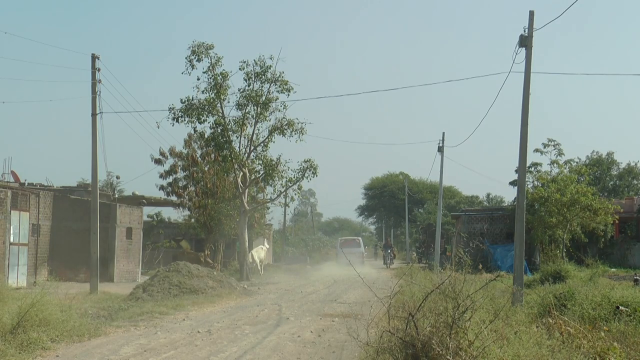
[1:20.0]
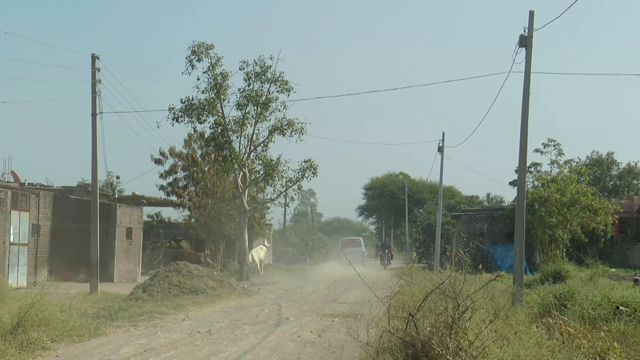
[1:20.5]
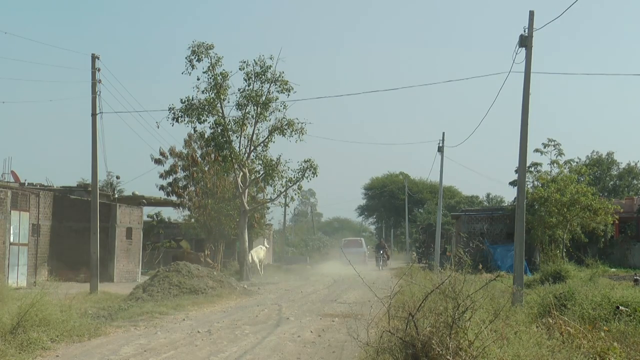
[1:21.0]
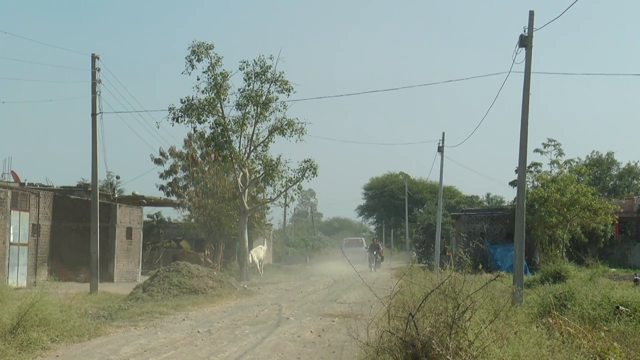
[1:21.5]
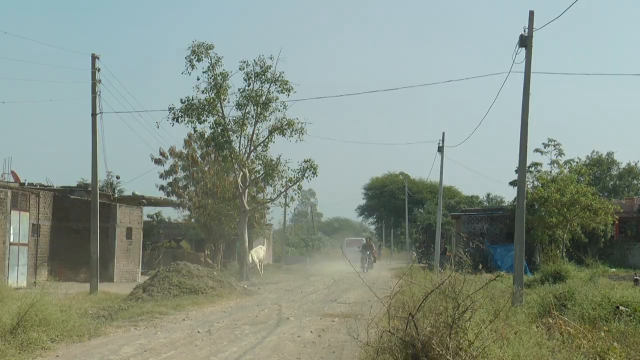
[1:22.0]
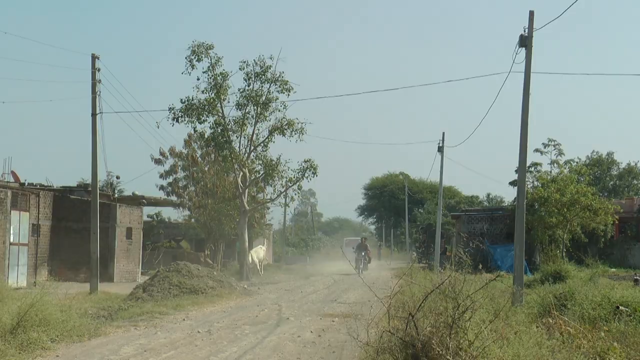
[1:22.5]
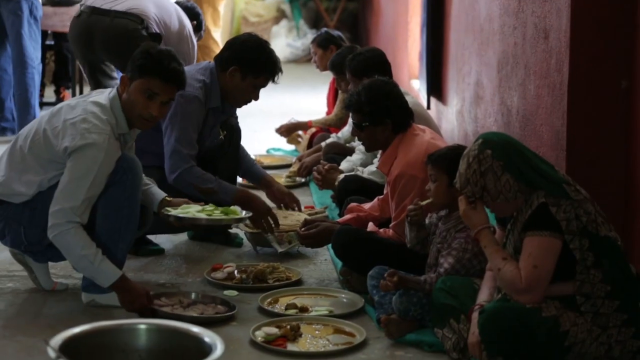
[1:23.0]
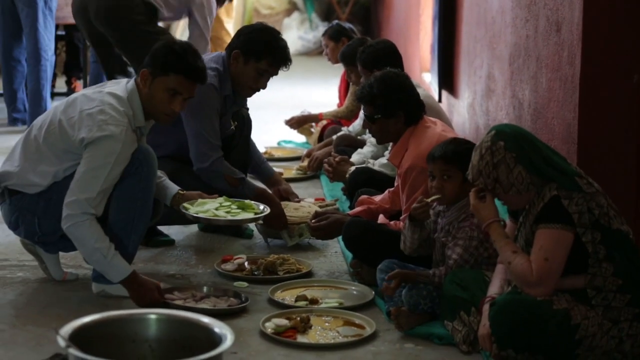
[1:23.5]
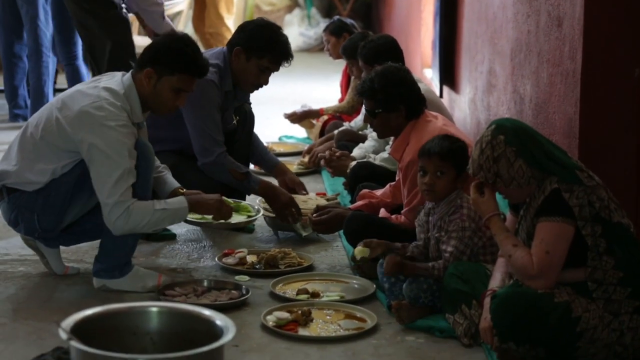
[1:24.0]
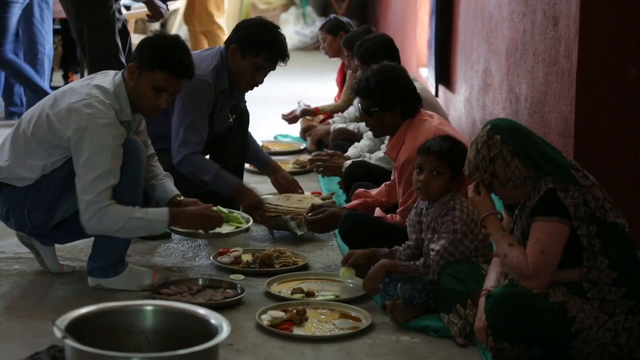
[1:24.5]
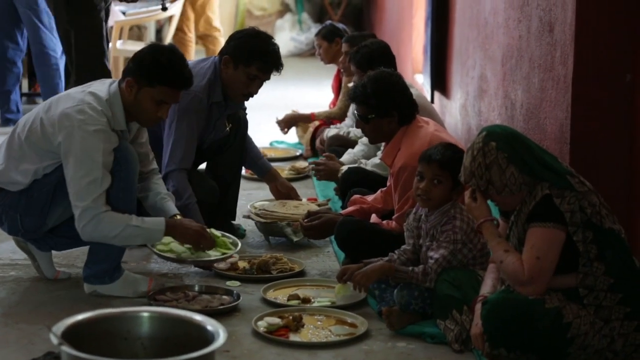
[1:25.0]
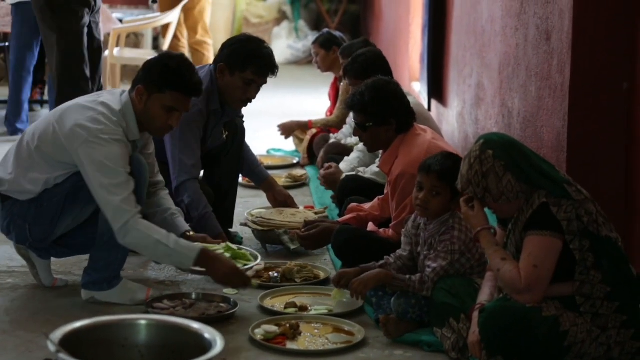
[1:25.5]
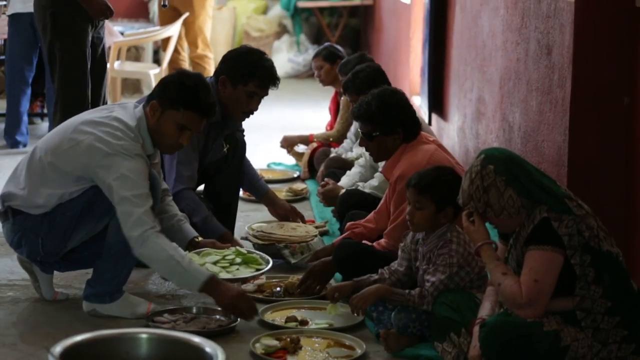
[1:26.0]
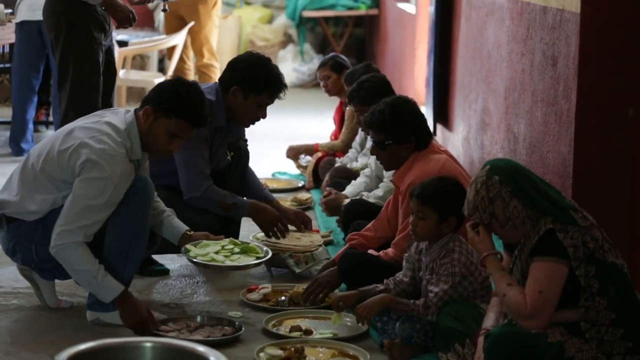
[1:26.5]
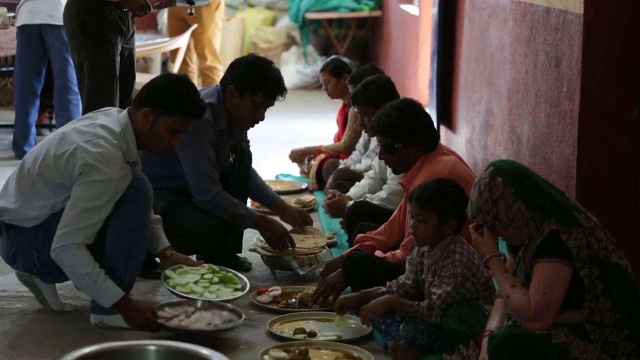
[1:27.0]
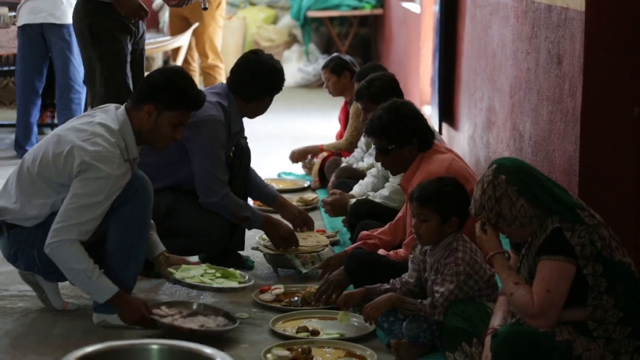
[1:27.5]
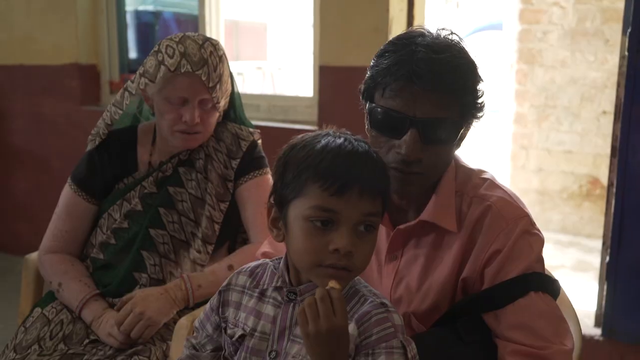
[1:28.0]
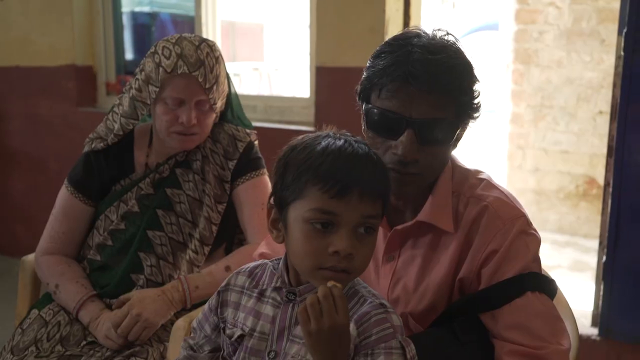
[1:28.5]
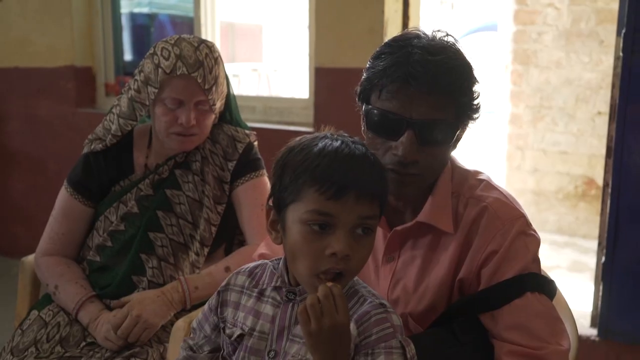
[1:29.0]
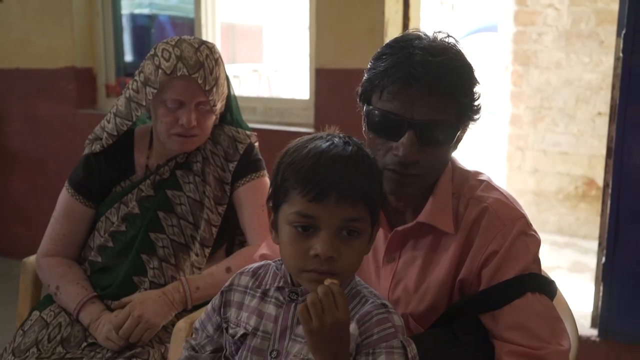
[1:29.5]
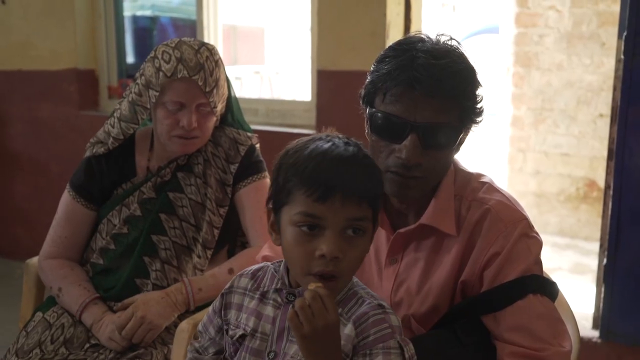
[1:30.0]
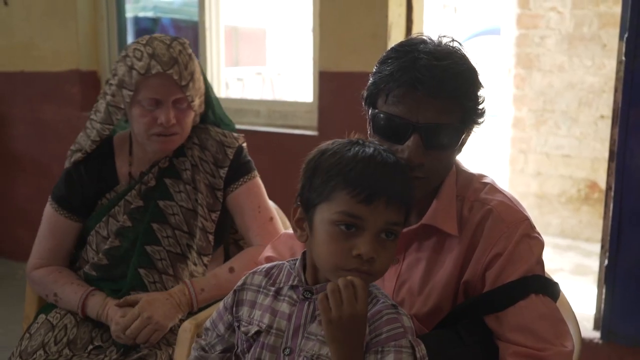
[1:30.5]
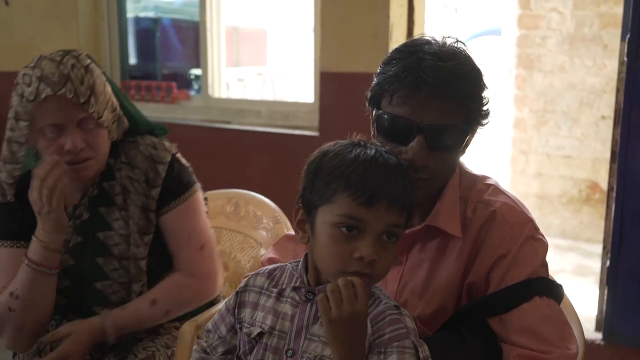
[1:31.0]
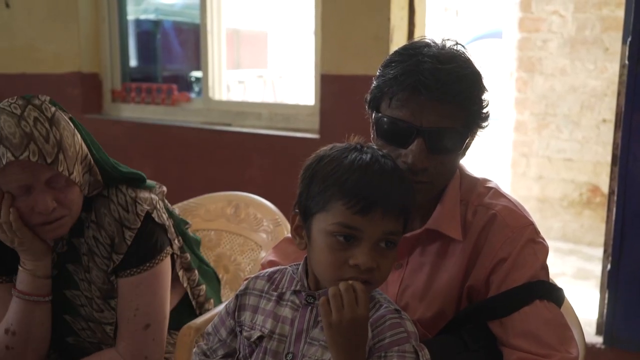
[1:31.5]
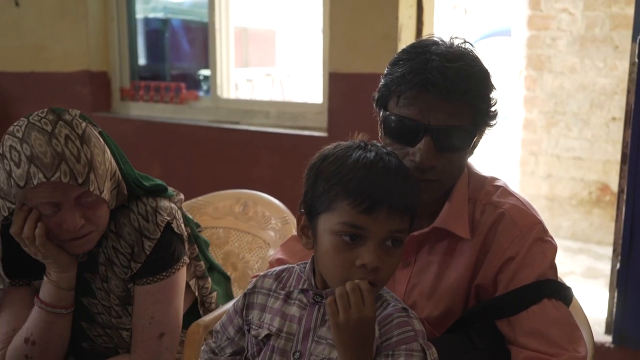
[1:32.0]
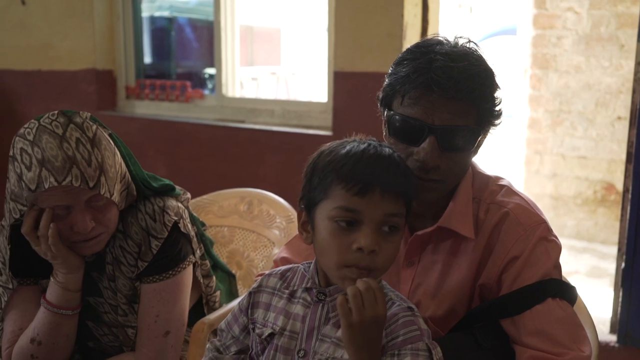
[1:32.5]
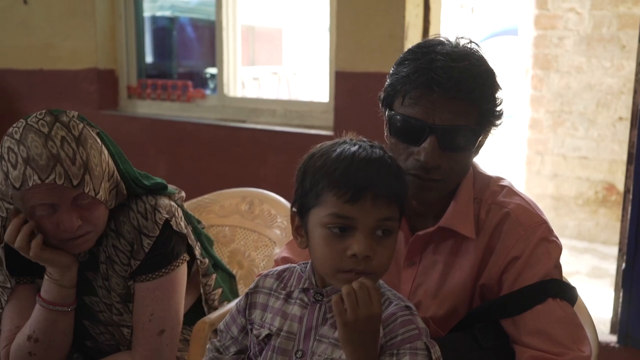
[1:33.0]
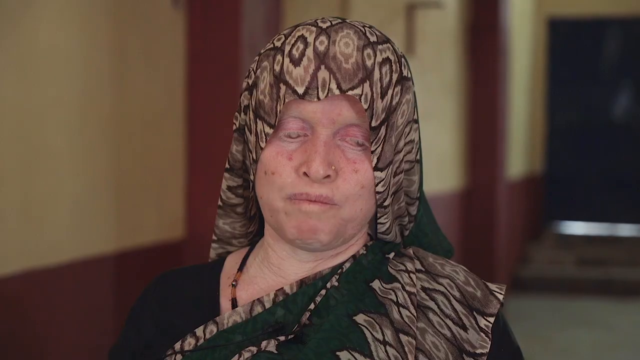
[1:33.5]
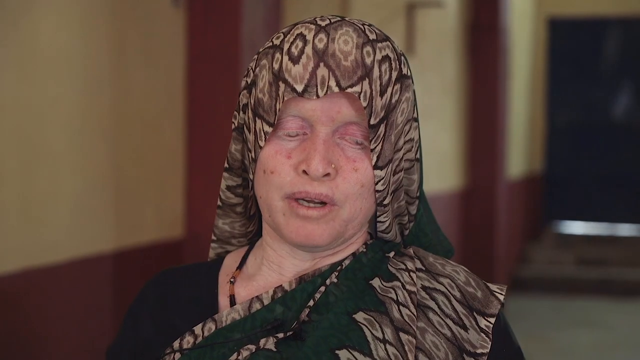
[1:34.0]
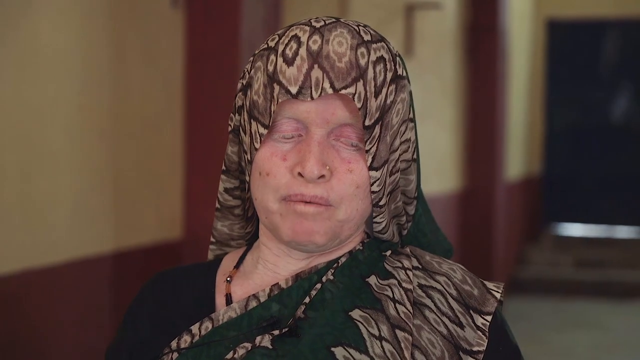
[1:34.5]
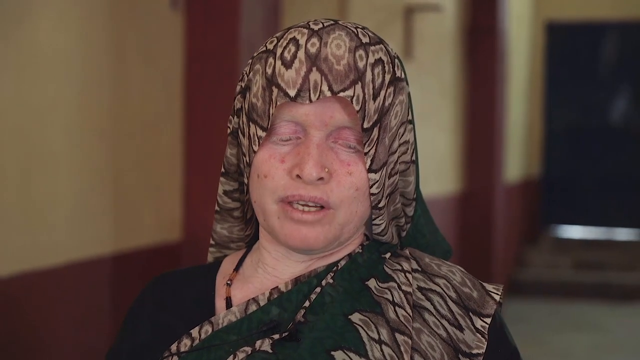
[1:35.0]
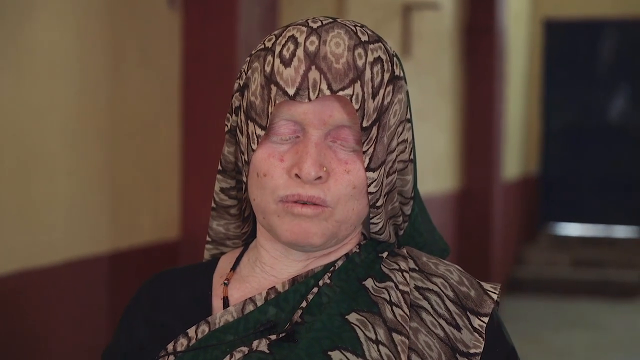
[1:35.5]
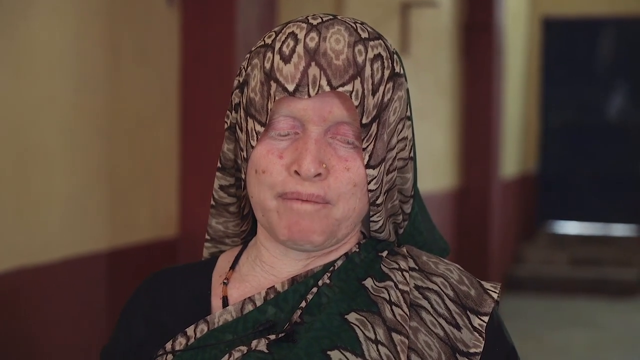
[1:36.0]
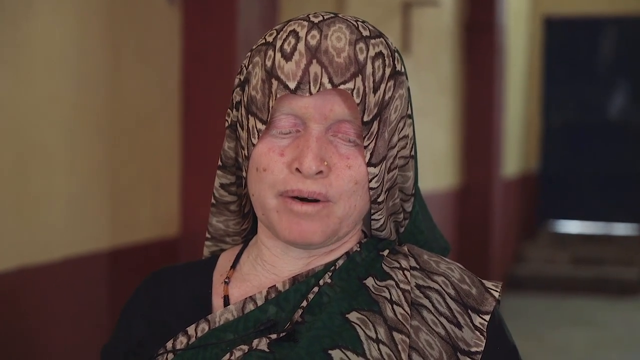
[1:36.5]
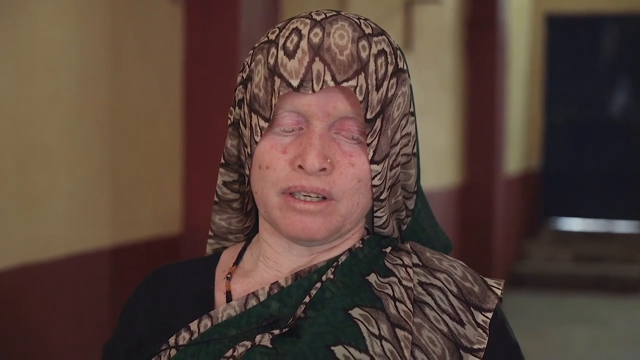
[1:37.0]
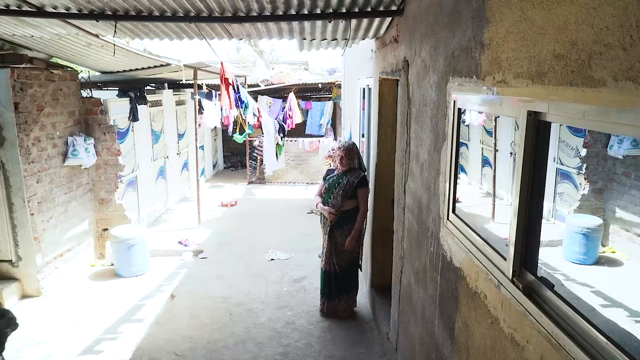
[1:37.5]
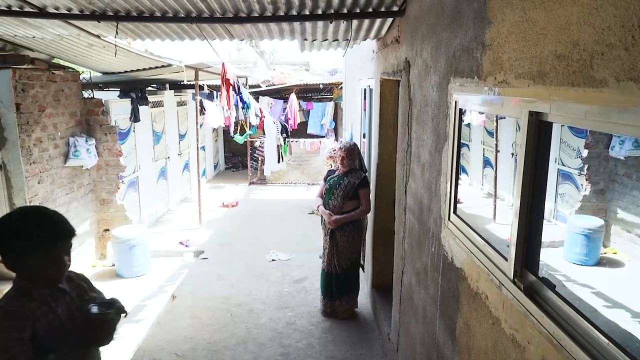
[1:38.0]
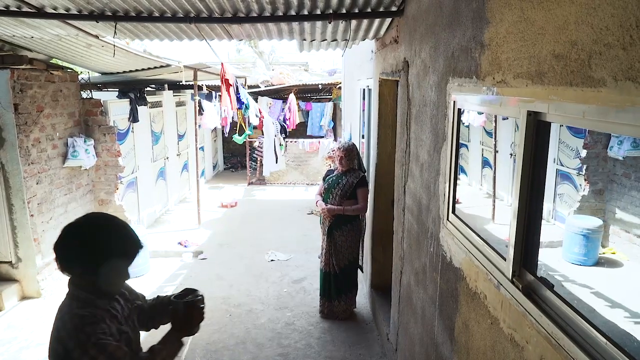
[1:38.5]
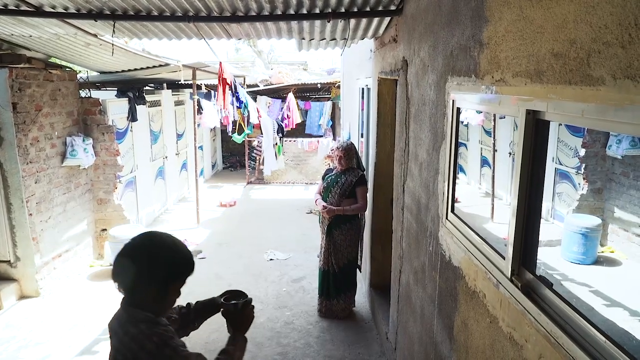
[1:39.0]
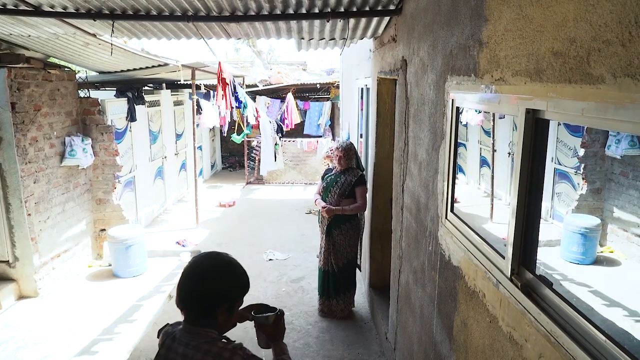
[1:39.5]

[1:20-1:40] On the dirt road, the motorcycle and a vehicle ride down the road up against tree-lined buildings. Then a group of people sits on the ground with plates in front of them, looking like they are eating a meal. The blind woman, the blind man and the children appear to be present at the bottom. Ten people are visible, along with at least nine plates of various foods; it is hard to see exactly what they are eating, maybe some vegetables such as cucumbers. Another shot shows the couple and the young child sitting in another building with the door open and light streaming in; it is the same red and cream-colored kind of building layout, half red and half white, and they sit in white chairs. Then the woman is shown alone, talking to someone; she appears to have a nose piercing. Next, on a walkway outside the building, she is standing up near the door frame, and somebody, maybe her older son, walks into the bottom left. Clothing hangs off something from the ceiling, and there are what look like stone walls.